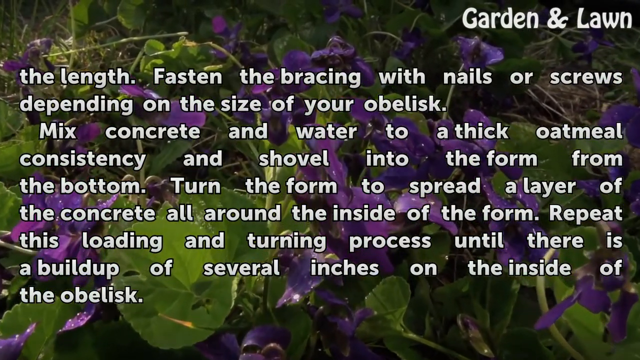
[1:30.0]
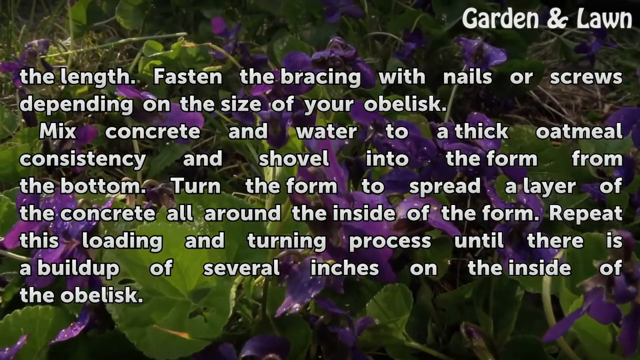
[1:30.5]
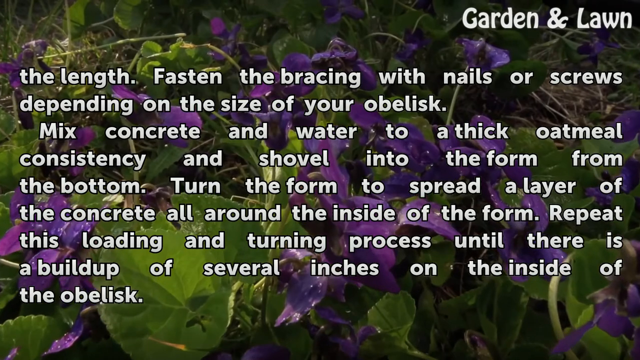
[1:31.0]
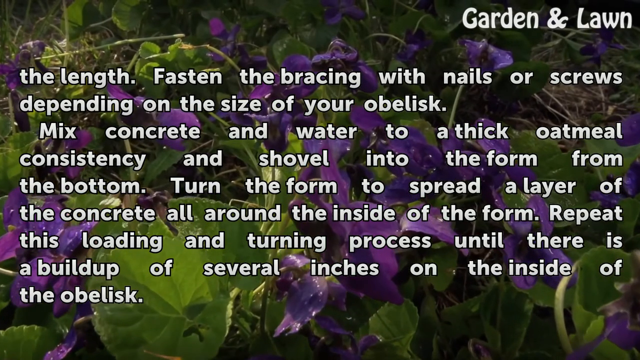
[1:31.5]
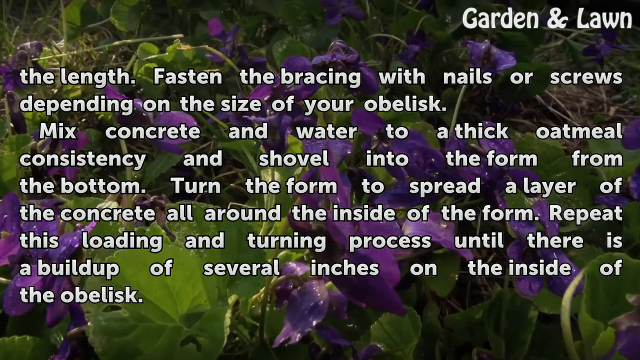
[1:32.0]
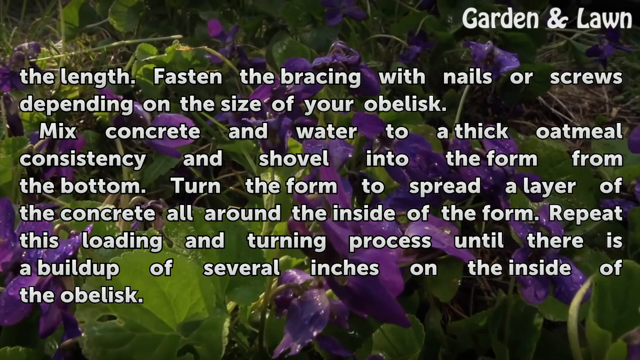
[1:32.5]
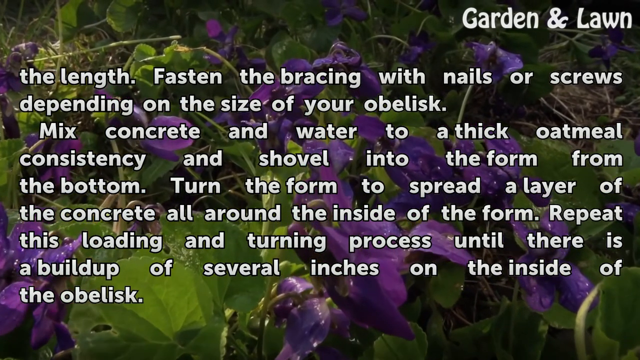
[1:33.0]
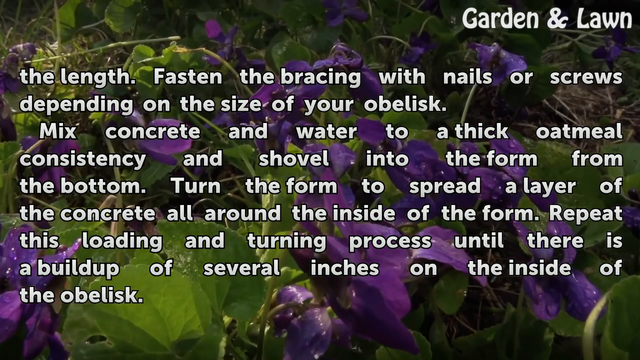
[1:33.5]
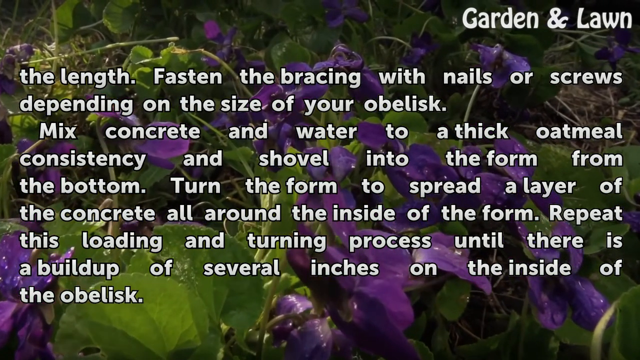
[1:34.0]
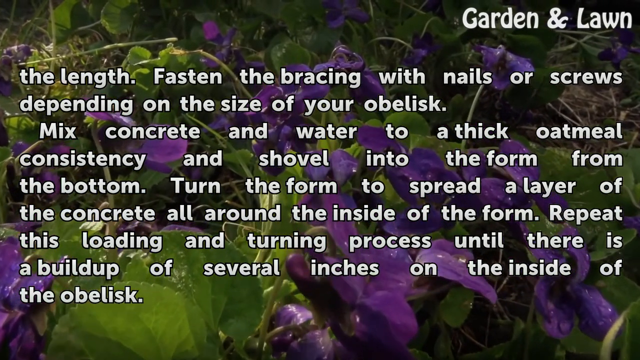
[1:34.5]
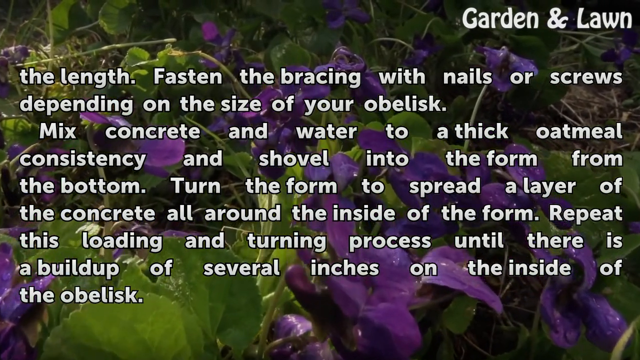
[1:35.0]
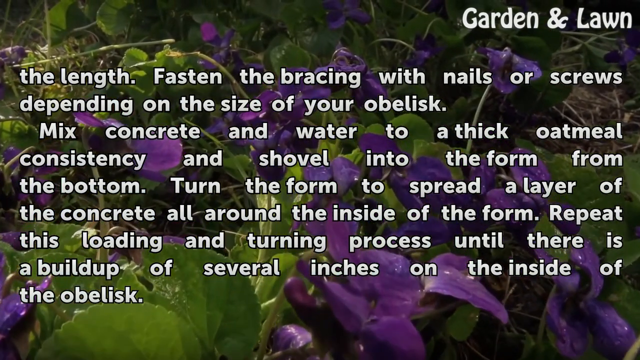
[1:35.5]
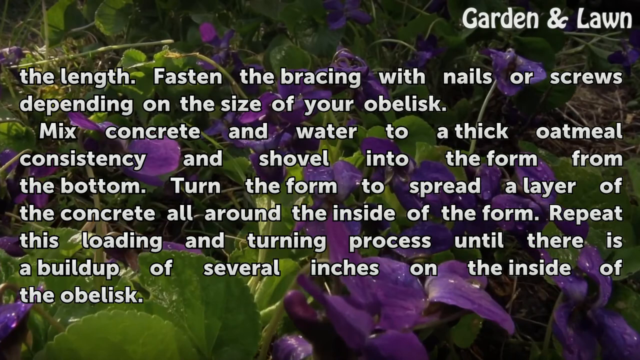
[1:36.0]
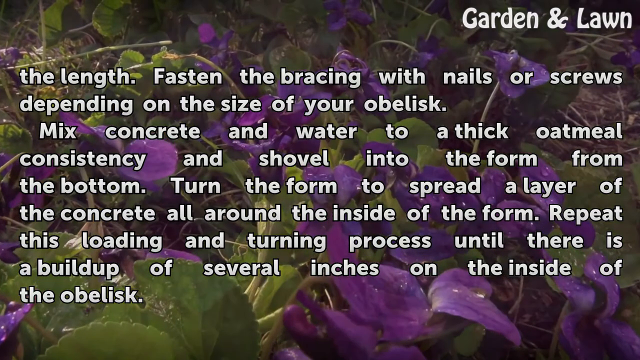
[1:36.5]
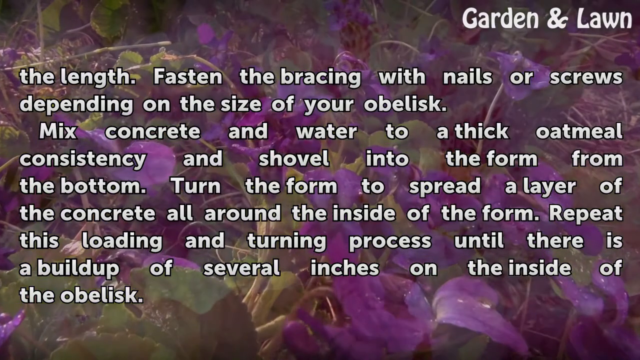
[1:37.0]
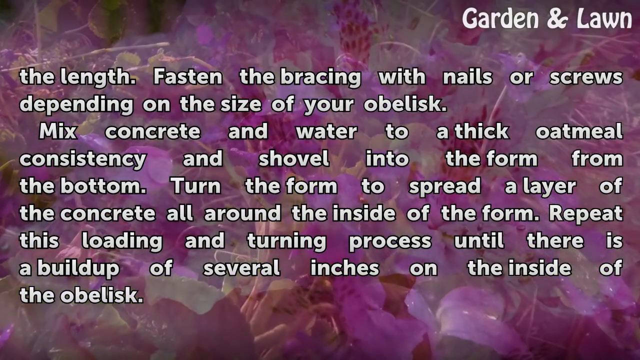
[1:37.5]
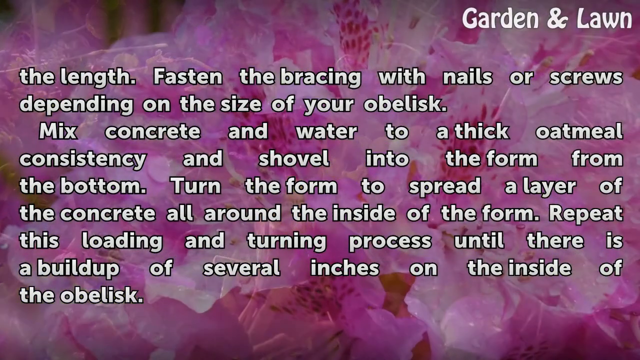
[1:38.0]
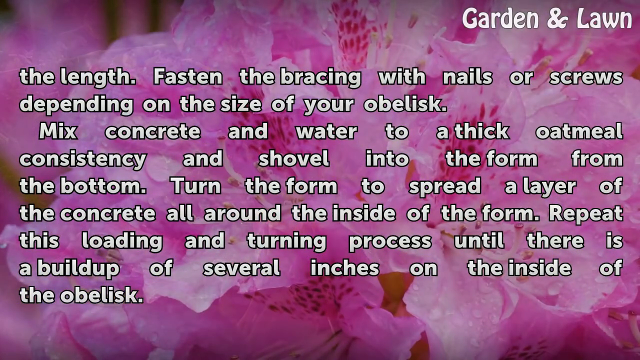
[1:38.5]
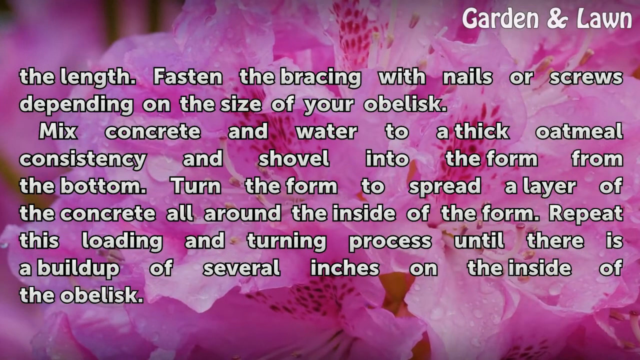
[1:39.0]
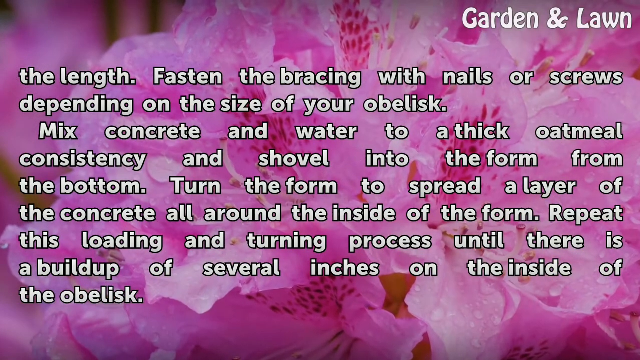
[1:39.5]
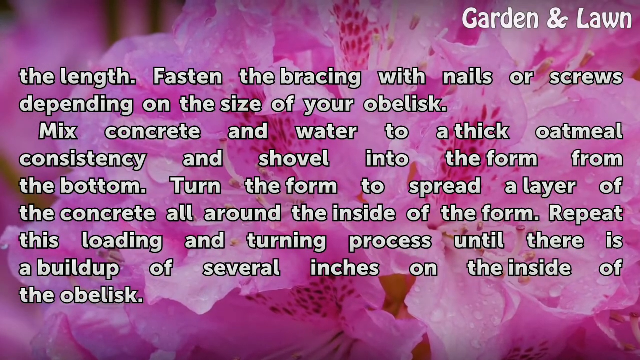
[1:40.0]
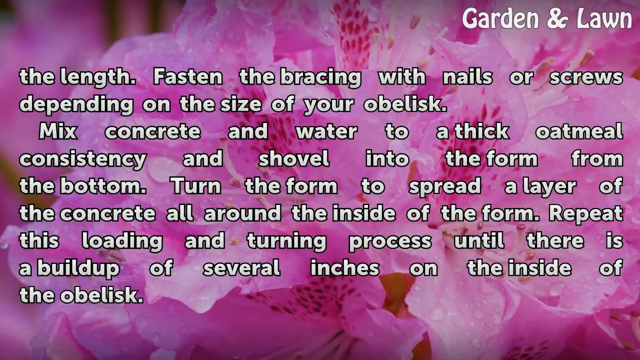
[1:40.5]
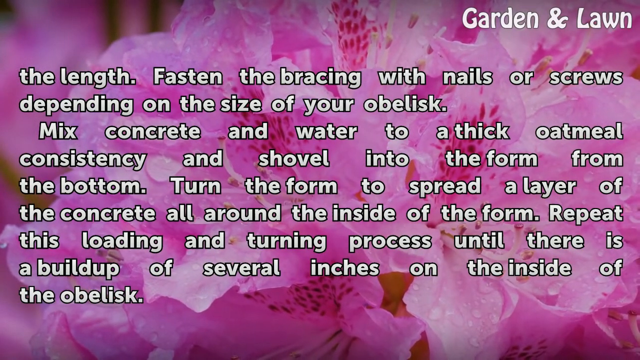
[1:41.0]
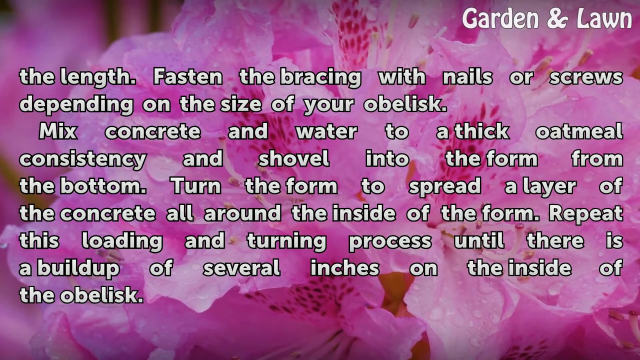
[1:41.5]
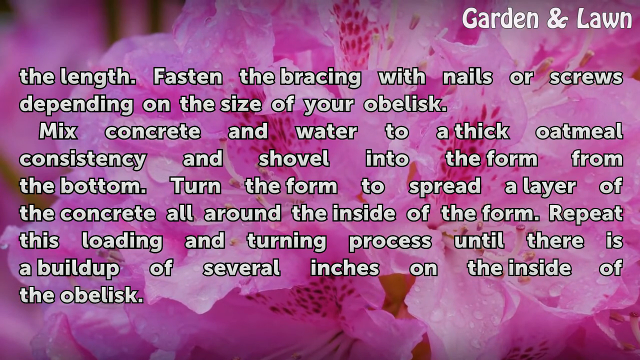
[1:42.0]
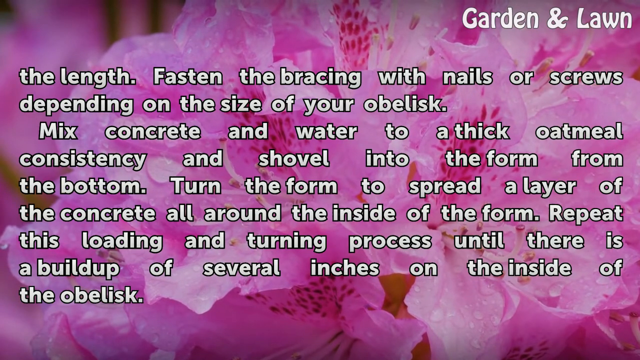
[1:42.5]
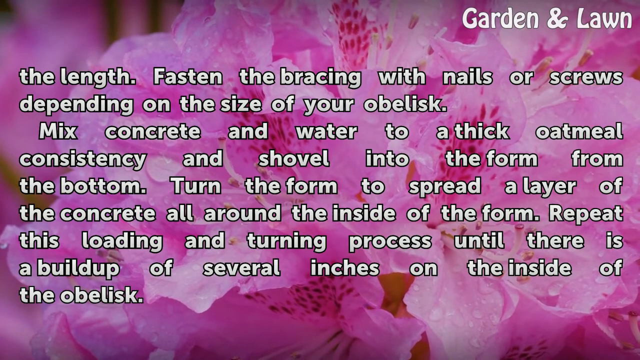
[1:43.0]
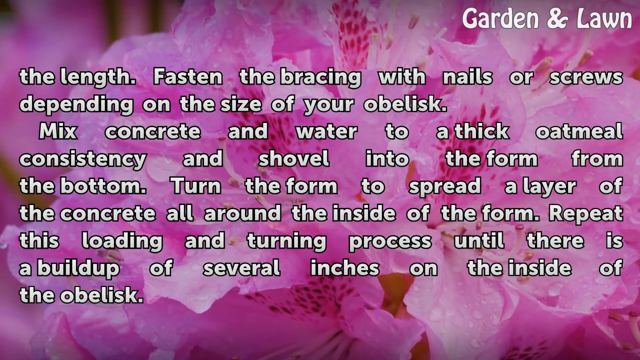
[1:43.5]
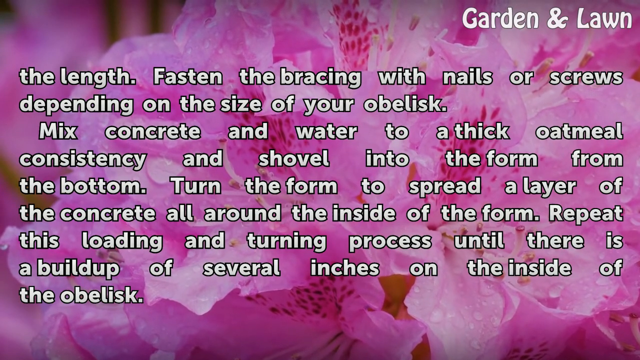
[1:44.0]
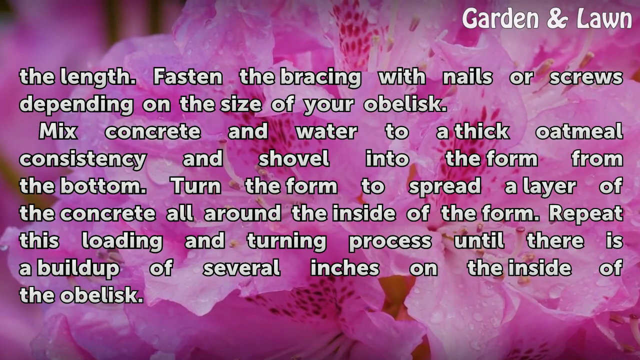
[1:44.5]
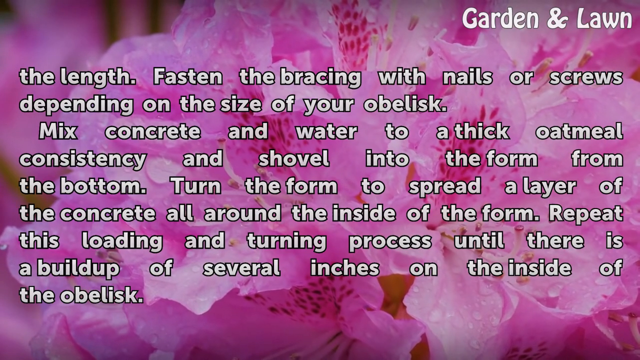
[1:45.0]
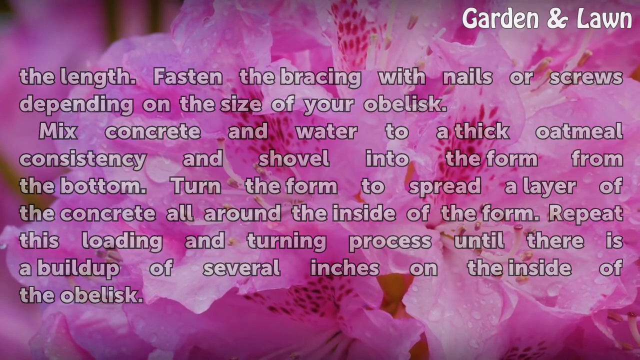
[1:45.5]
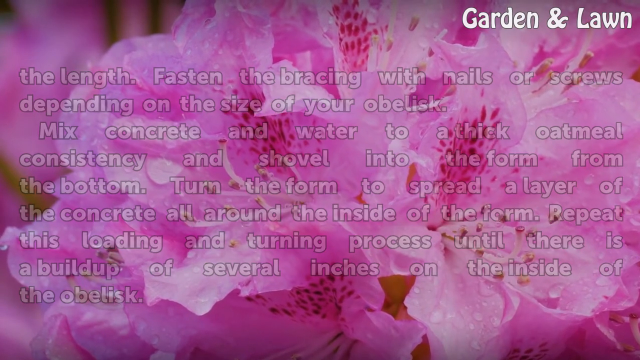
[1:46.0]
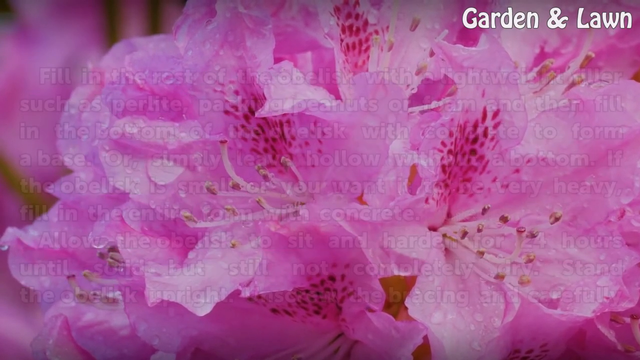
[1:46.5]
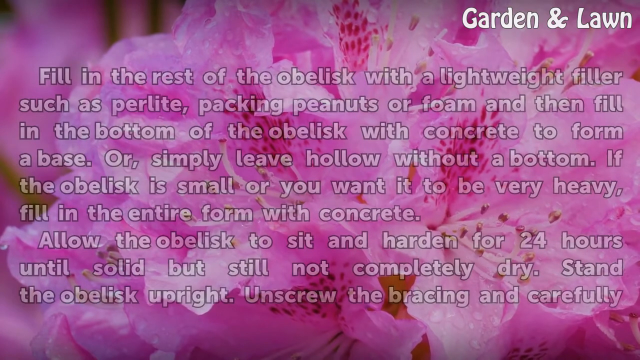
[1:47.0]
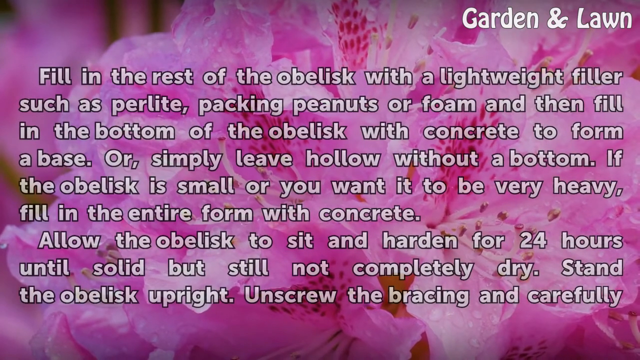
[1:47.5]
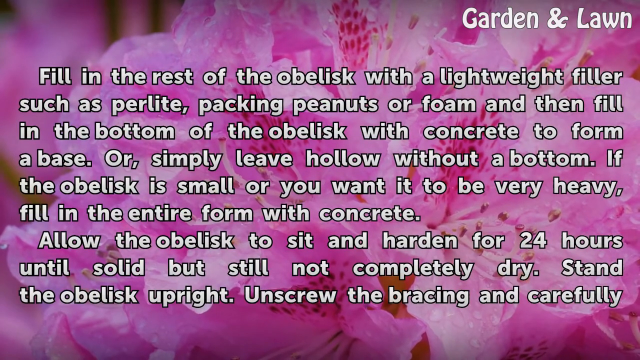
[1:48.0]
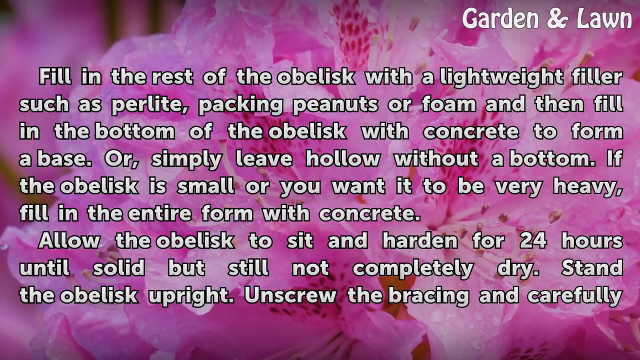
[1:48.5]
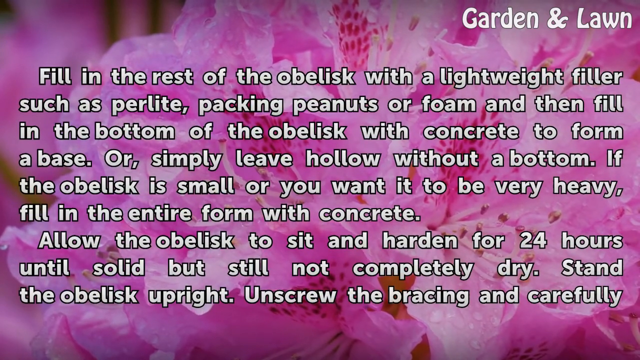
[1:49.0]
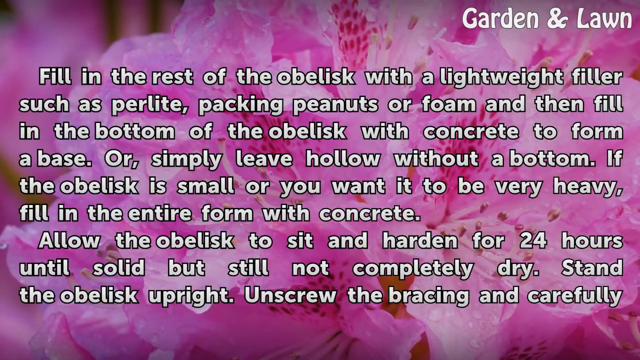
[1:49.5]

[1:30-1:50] A second page of obelisk construction instructions reads "Fasten the bracing with nails or screws, depending on the size of your obelisk. Mix concrete and water to a thick oatmeal consistency and shovel into the form from the bottom. Turn the form to spread a layer of the concrete all around the inside of the form. Repeat this loading and turning process until there is a buildup of several inches on the inside of the obelisk." The white text is superimposed over a slowly moving, panning image of a purple and green ground surface mixed with grass. In the upper right corner, in white font, is "Lawn and Garden." The background slowly transitions to pink plants while the text stays the same. After another transition, a new page of white text outlined in black appears over slowly panning pink flower petals: "Fill in the rest of the obelisk with a lightweight filler, such as perlite, packing, peanuts, or foam, and then fill in the bottom of the obelisk with concrete to form a base. Or, simply leave the hollow without a bottom. If the obelisk is small or you want it to be very heavy, fill in the entire form with concrete. Allow the obelisk to sit and harden for 24 hours until solid, but still not completely dry. Stand the obelisk upright, unscrew the bracing, and carefully". The text ends abruptly after the word "carefully."